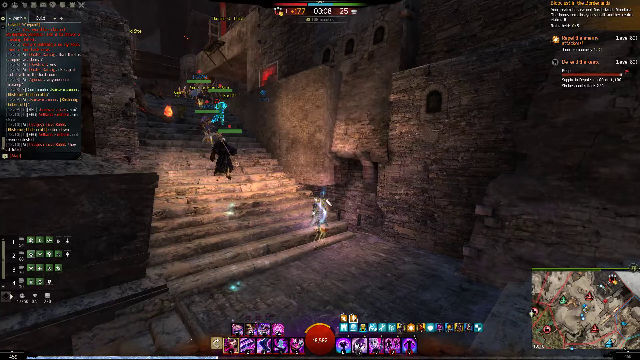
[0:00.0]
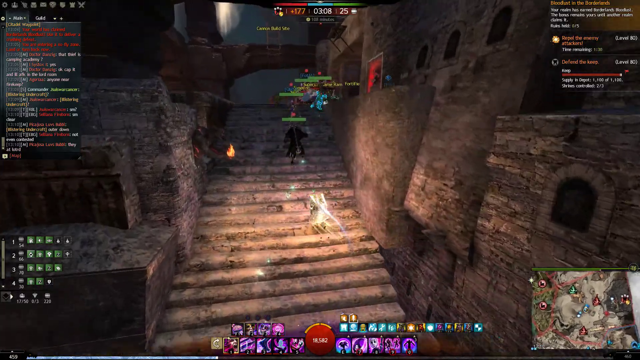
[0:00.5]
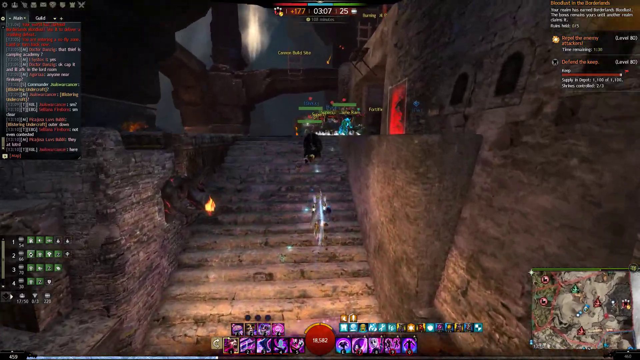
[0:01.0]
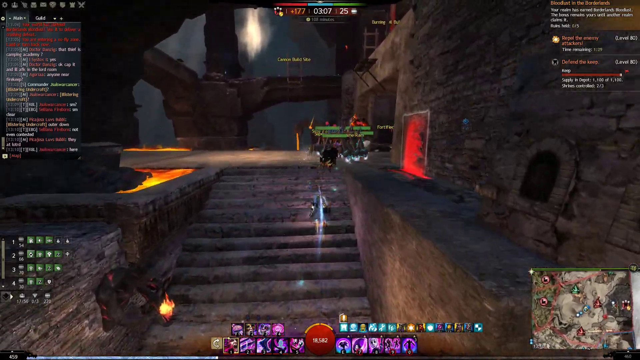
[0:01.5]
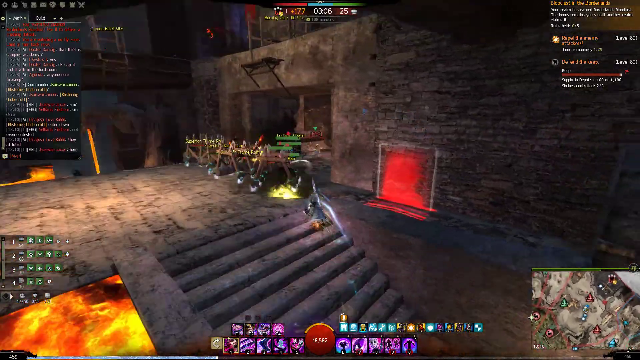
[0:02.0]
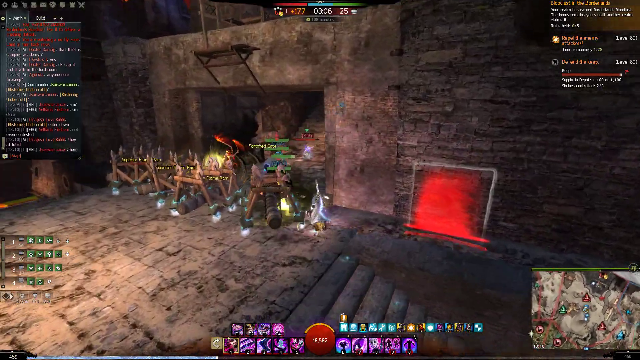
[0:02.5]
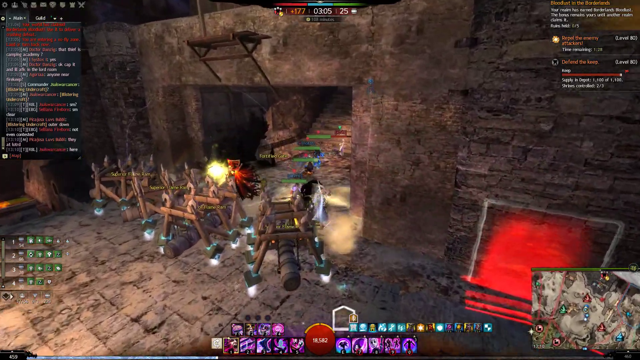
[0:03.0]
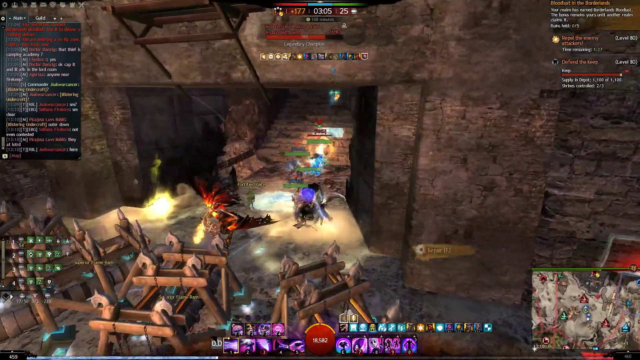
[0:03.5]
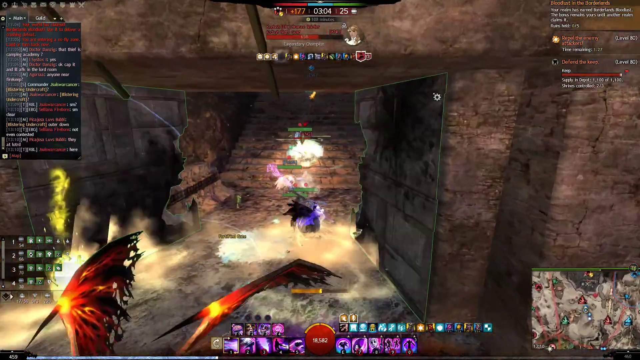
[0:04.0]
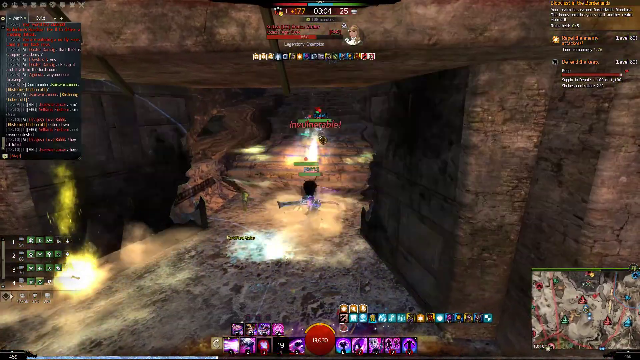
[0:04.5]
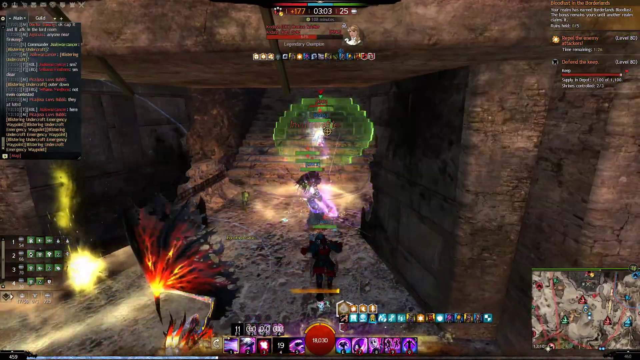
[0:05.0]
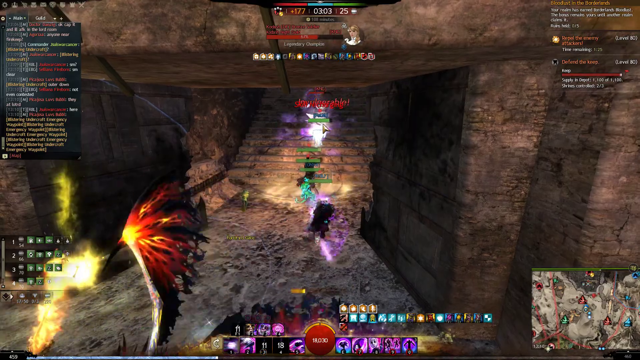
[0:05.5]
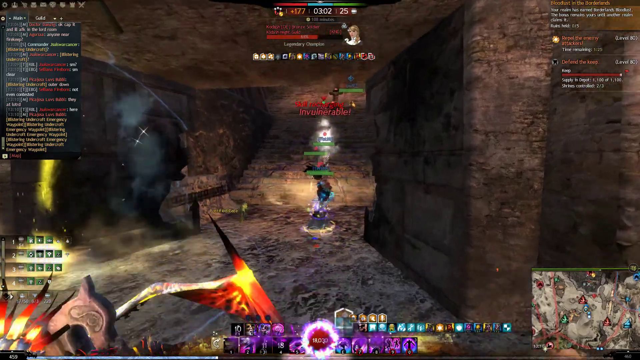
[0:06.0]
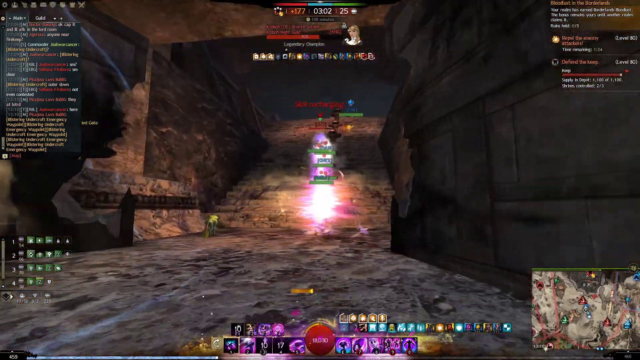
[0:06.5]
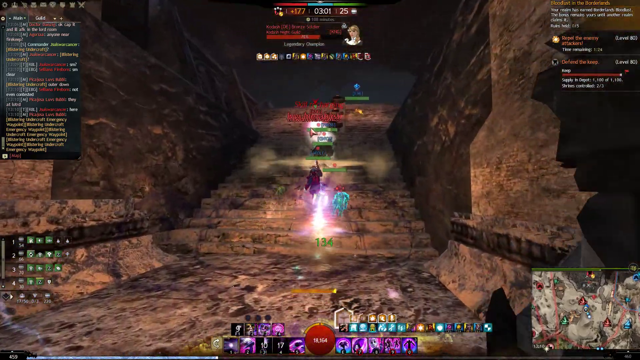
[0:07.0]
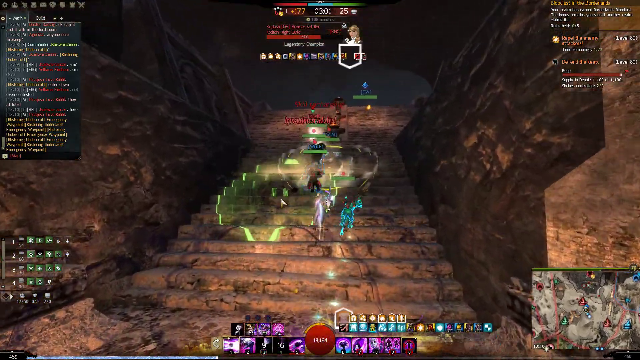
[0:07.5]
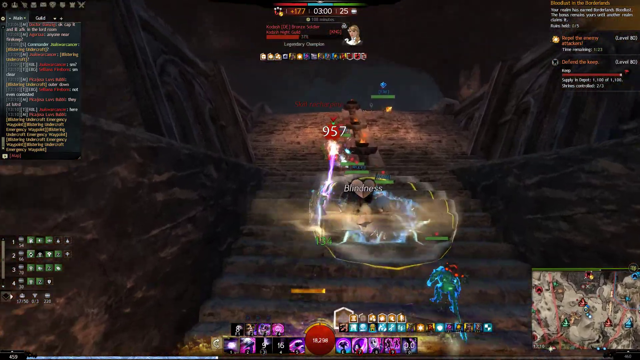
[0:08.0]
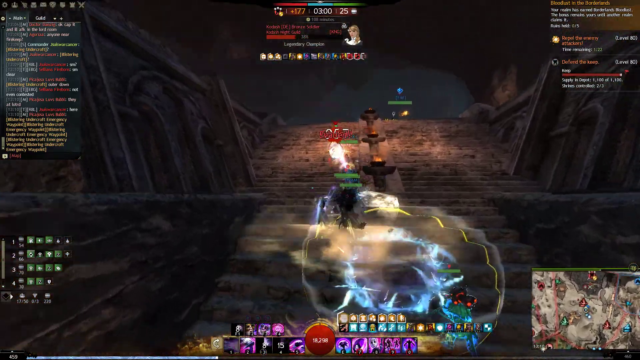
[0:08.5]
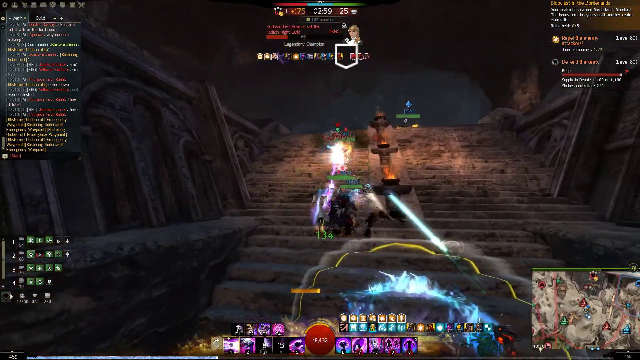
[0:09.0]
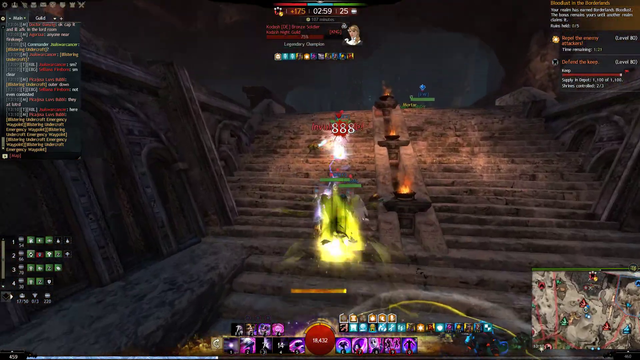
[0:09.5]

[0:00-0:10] This is a video game playthrough in which the characters run through a dungeon area that looks like it is probably below a large castle, or possibly underneath a mountain. At the start, the characters run up a flight of stairs, then turn to the right and run into a corridor with more stairs at its end. They seem to be doing some light fighting as they run along. In the lower right part of the screen is a game map showing where the characters are in the game and where different spots in the game are.